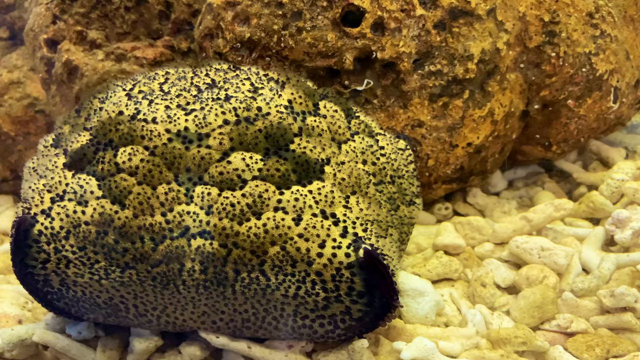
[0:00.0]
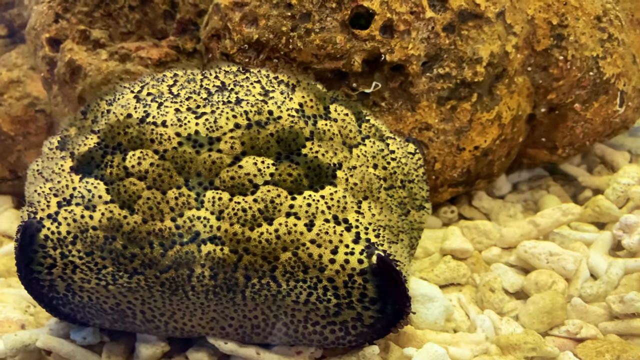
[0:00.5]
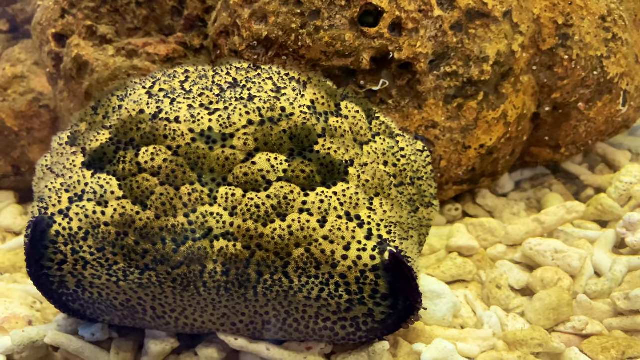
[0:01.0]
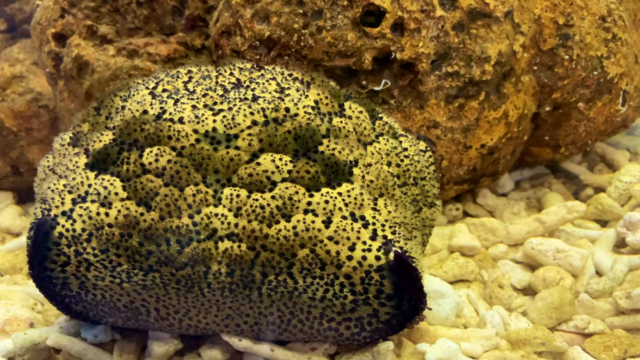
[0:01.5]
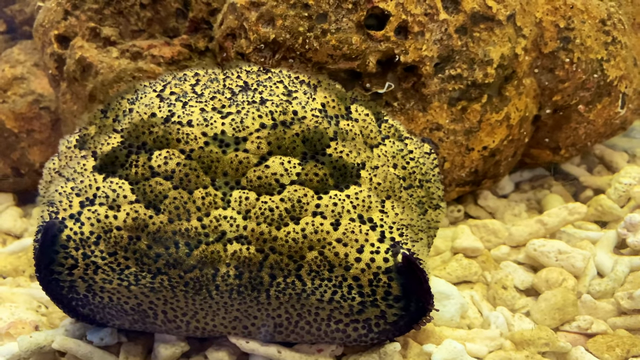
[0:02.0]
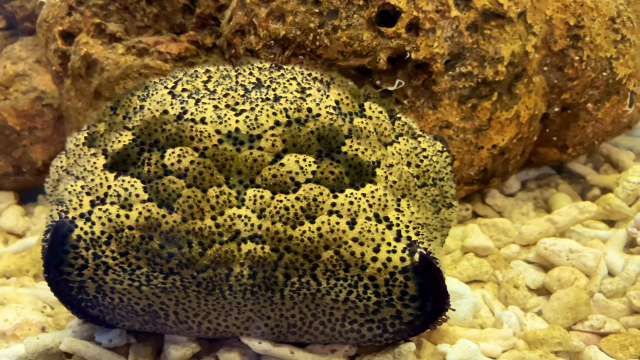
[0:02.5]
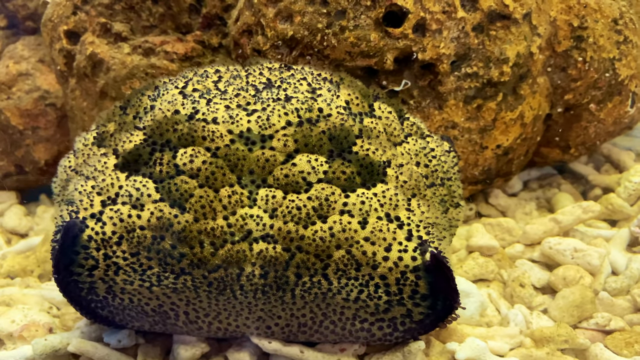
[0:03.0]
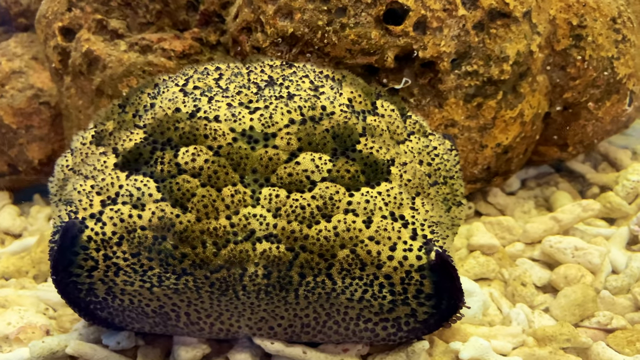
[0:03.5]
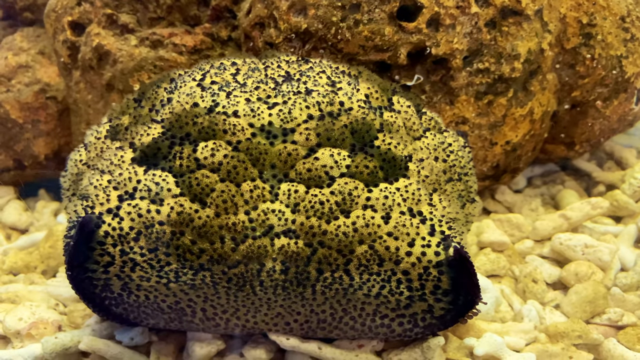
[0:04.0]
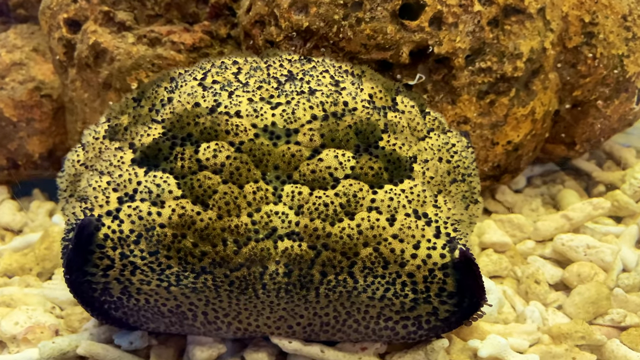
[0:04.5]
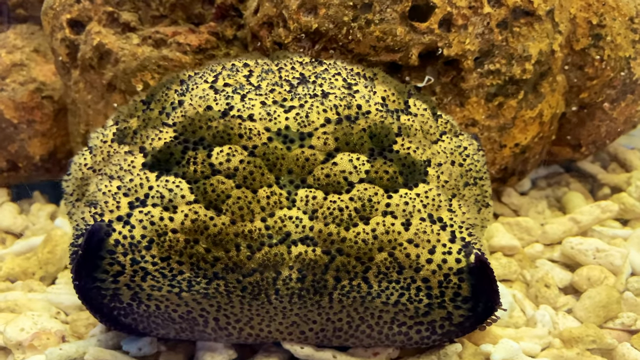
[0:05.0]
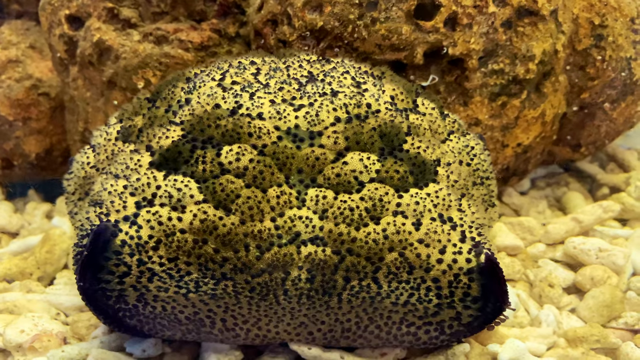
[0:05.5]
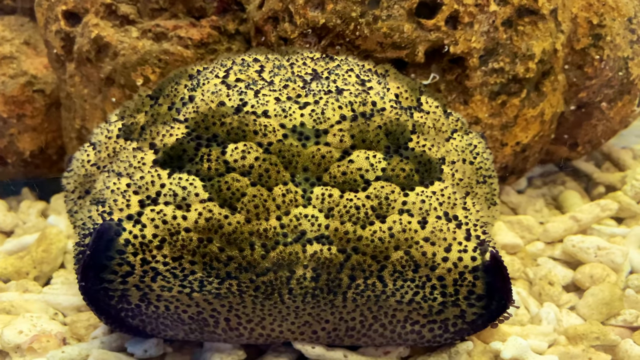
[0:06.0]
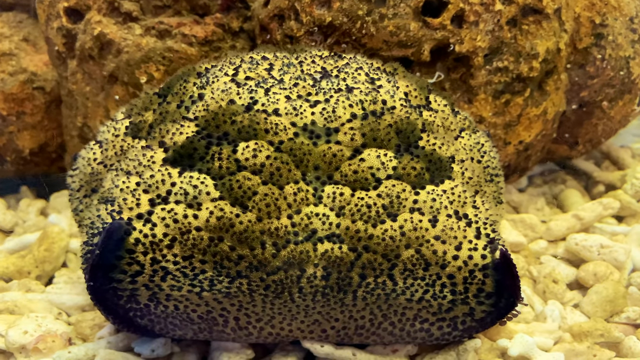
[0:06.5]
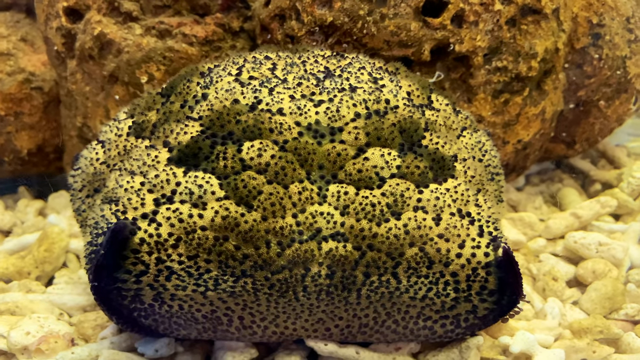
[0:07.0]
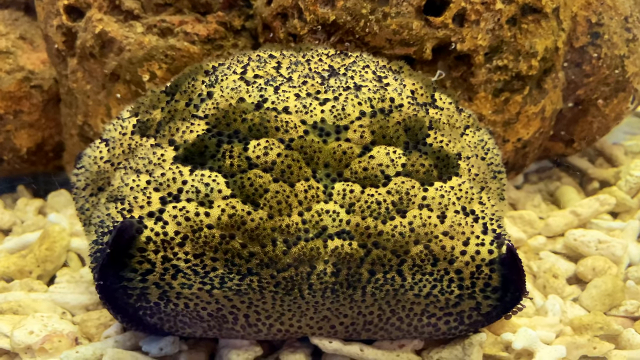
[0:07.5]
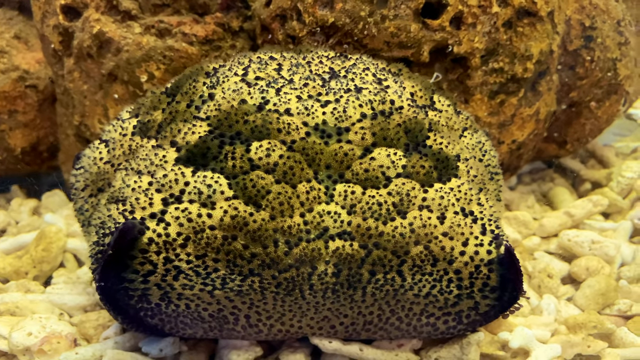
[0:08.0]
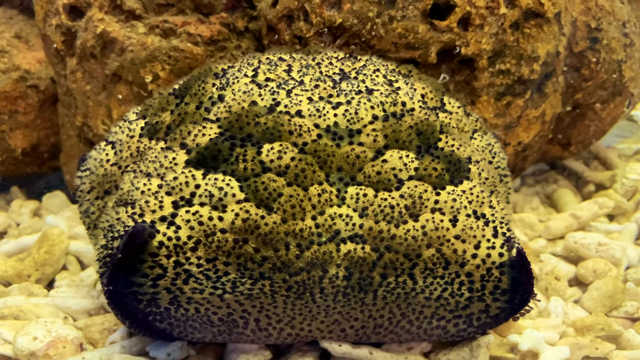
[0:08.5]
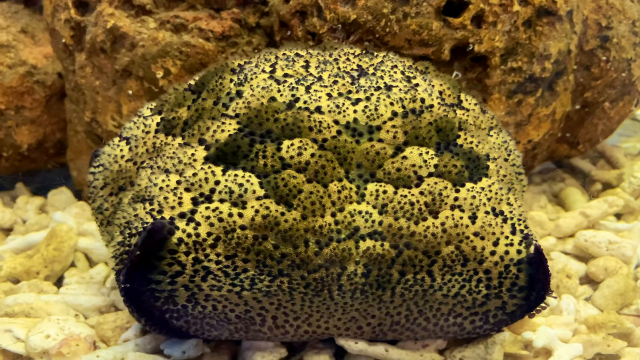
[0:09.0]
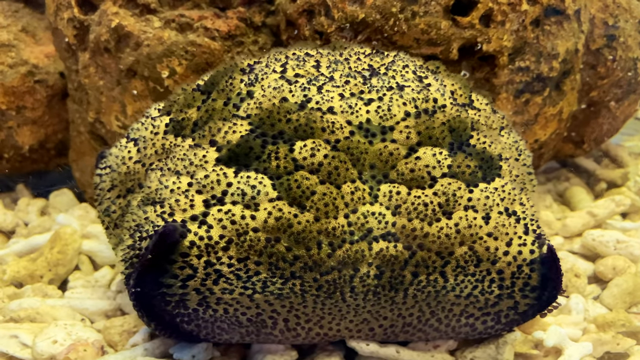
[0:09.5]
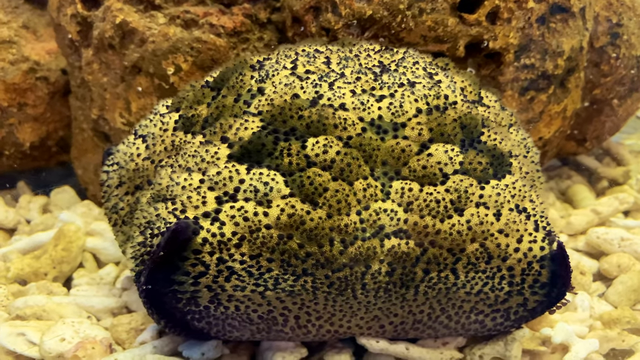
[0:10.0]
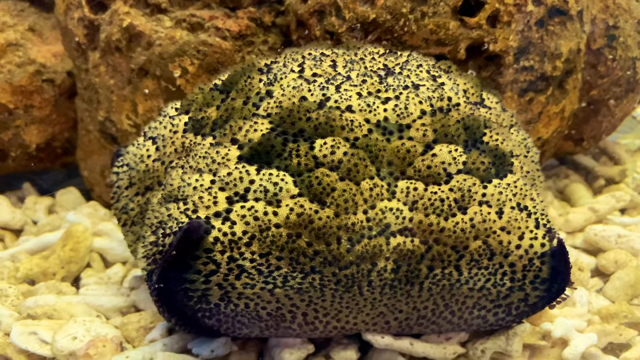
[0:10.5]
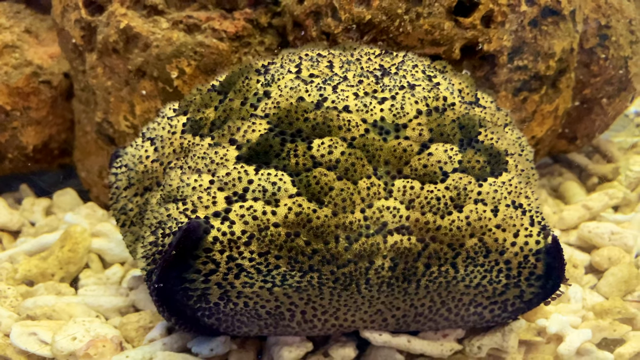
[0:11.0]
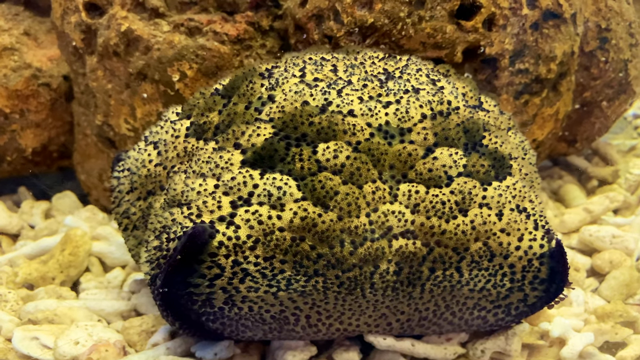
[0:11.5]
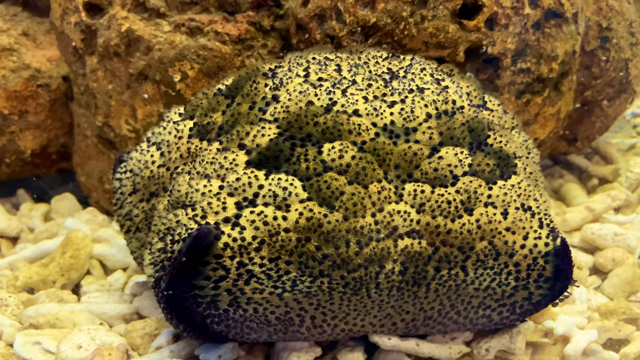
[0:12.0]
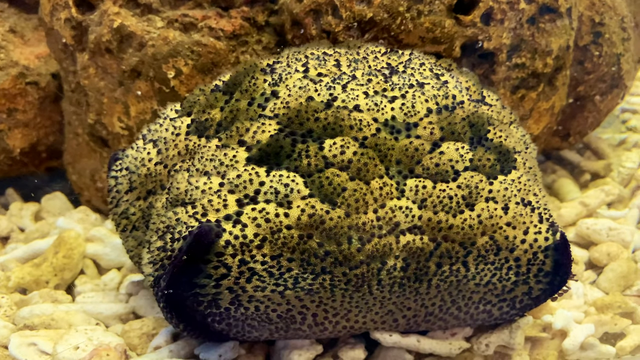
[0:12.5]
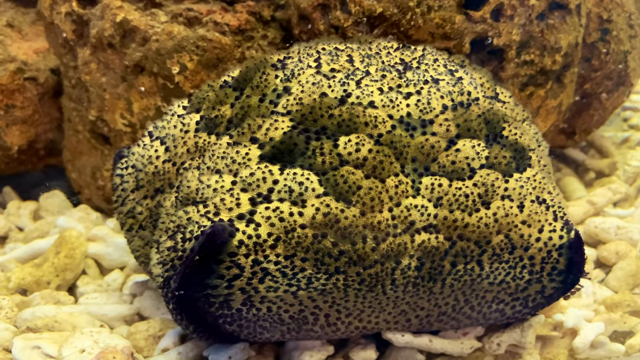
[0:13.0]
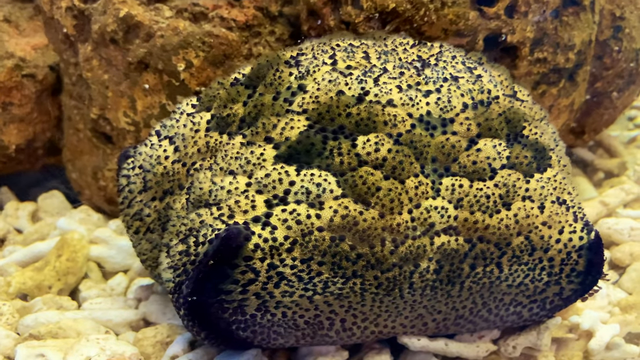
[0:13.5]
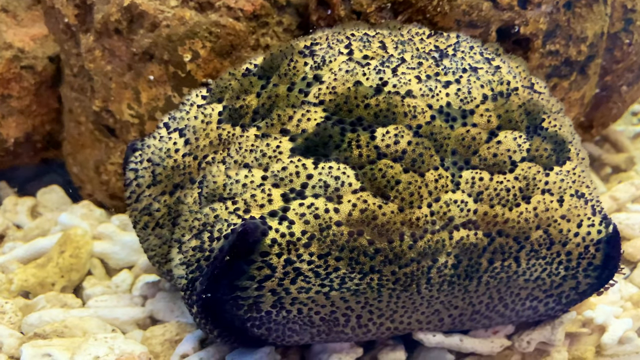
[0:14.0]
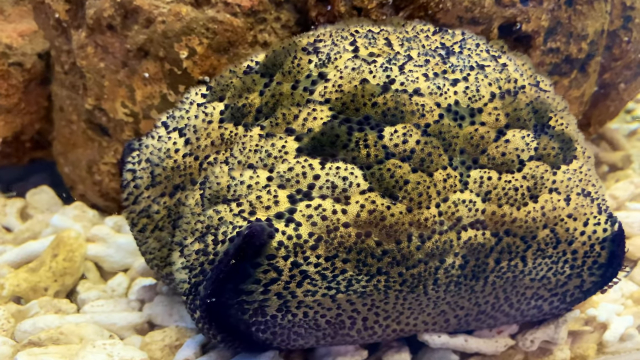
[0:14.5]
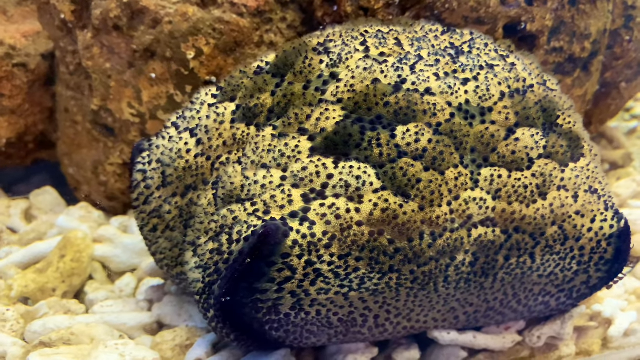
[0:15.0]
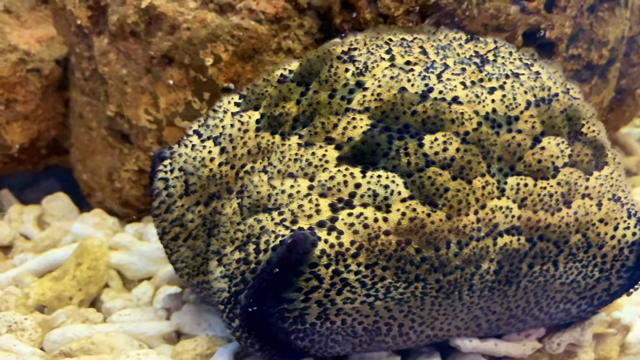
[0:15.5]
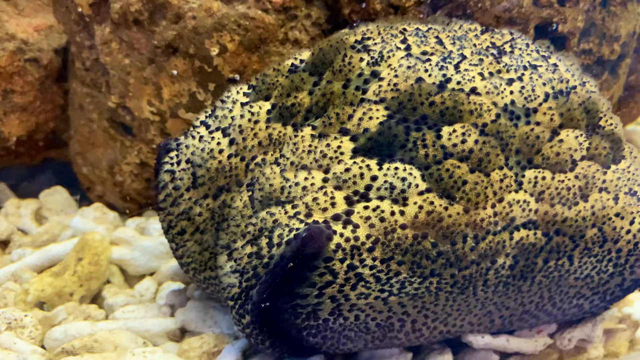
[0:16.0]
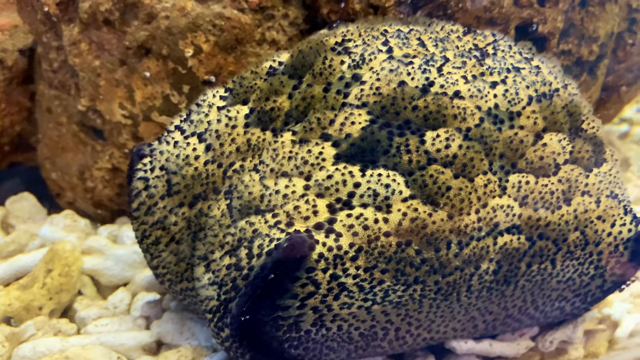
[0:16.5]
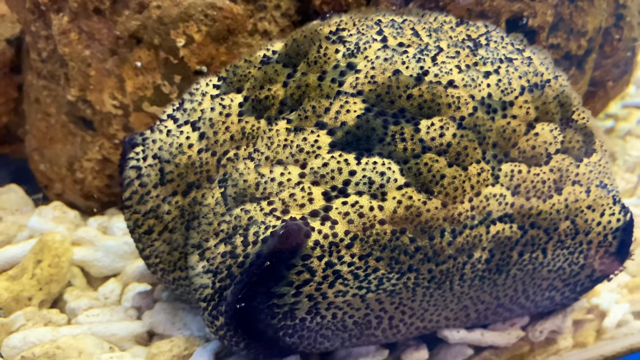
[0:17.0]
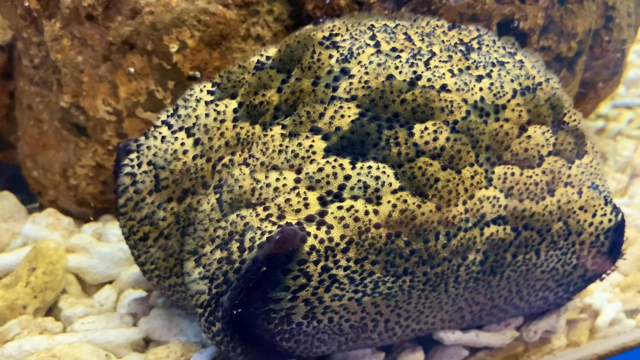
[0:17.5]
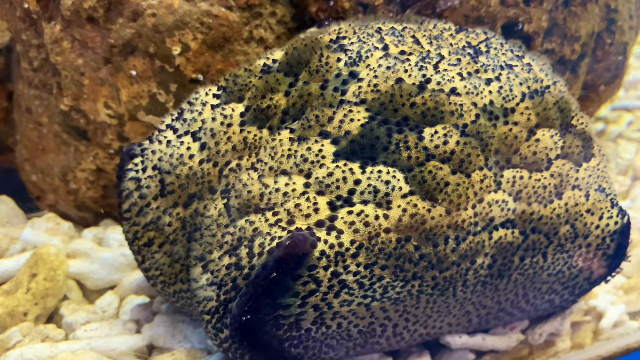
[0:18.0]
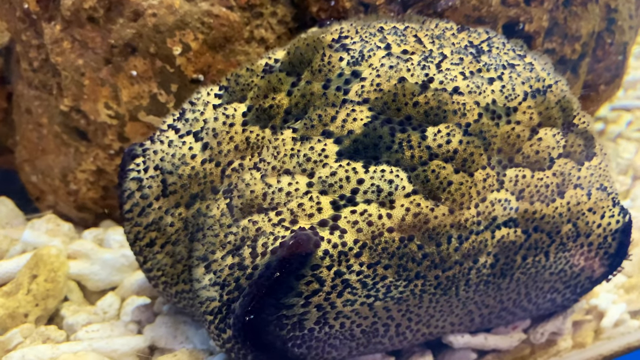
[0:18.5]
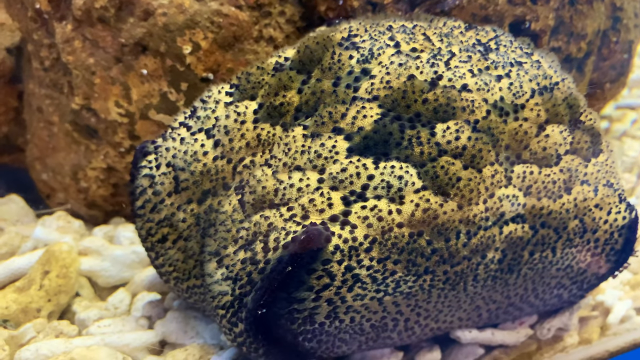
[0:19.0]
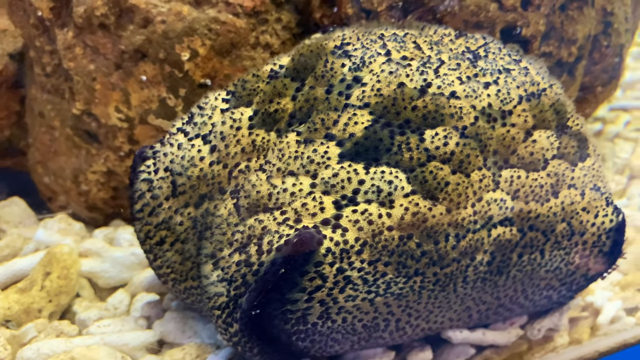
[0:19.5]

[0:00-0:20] The scene is underwater, possibly in an aquarium cared for by people. The water is clear, with no debris floating in it. There is what looks like a yellow and black sponge or some kind of underwater living creature. The camera moves from right to left. Scattered throughout the floor are lots of broken bits of coral that are bleached and white or whitish yellow. The bits of coral have grooves and indentions; some are curvy and others are straight. The coral has some kind of green substance on it, maybe an underwater plant or fungus. In the background there is a large rock with lots of holes, grooves and indentions. The colors white, yellow, green and brown are visible. The image is clean and appears to be of a professionally cared-for space.